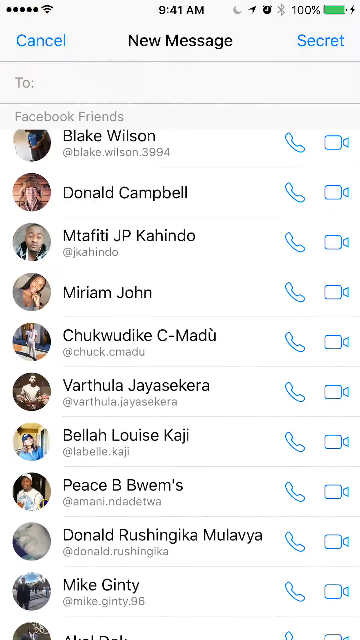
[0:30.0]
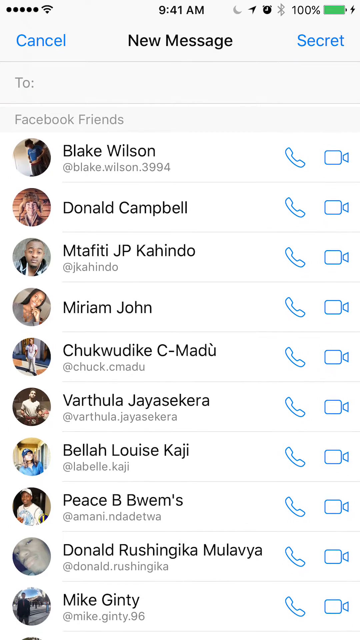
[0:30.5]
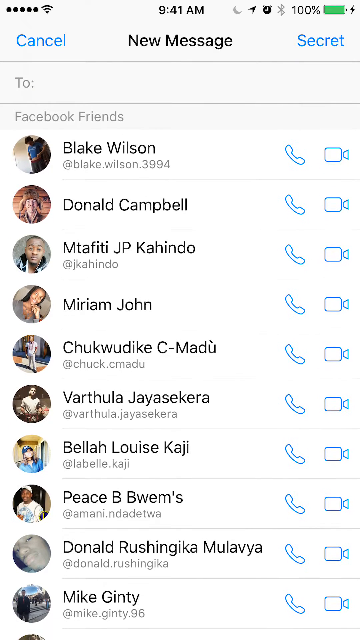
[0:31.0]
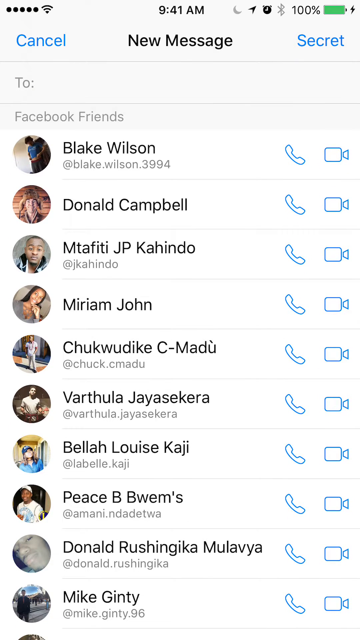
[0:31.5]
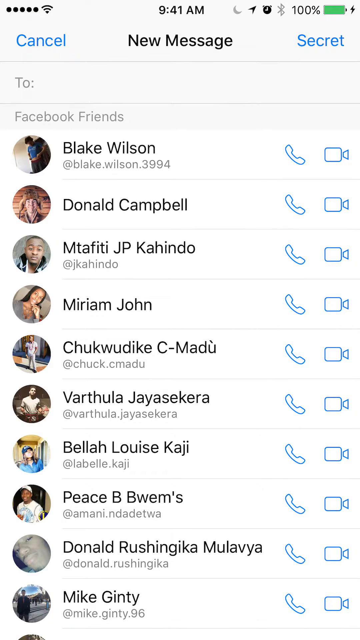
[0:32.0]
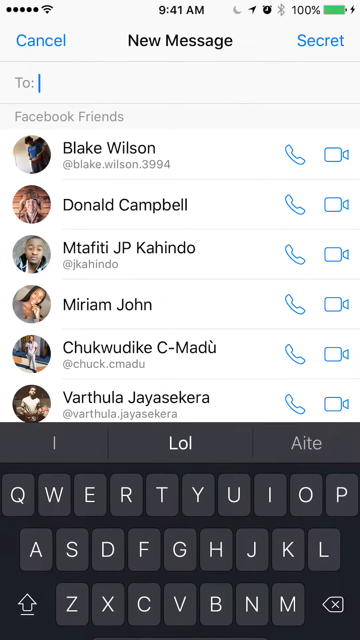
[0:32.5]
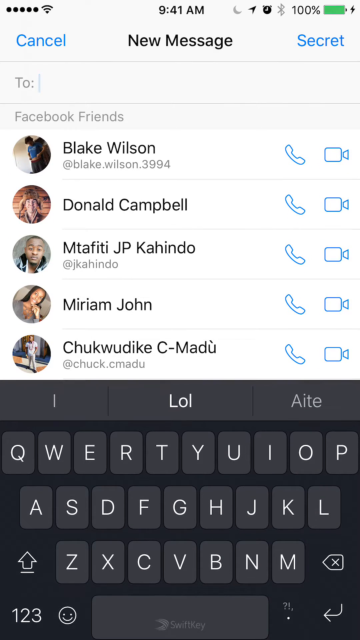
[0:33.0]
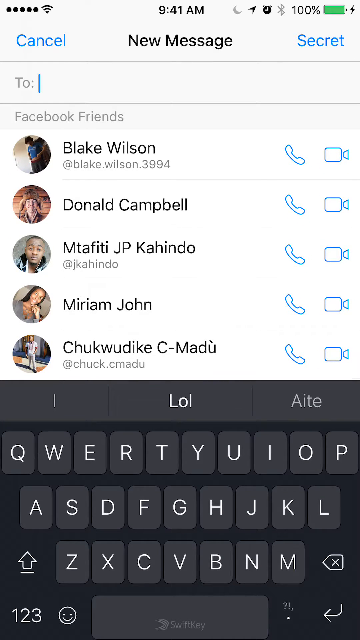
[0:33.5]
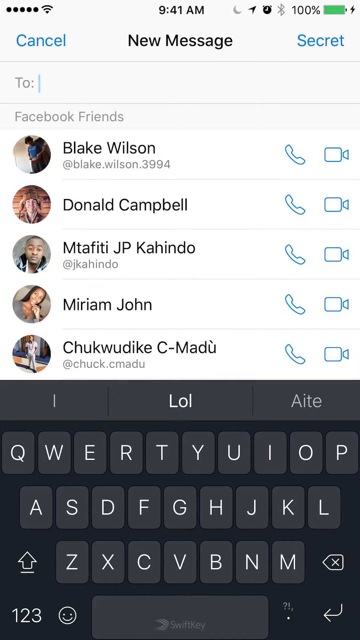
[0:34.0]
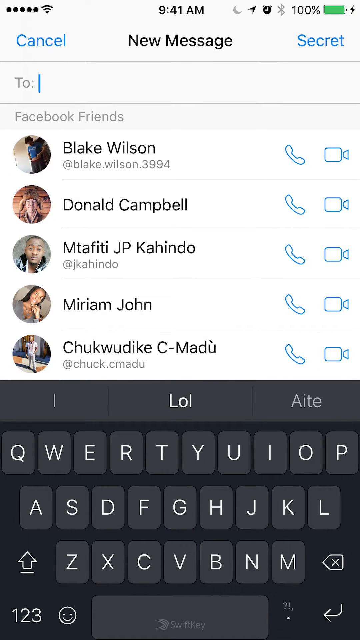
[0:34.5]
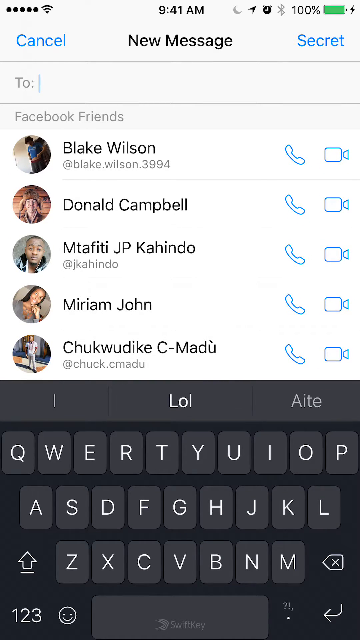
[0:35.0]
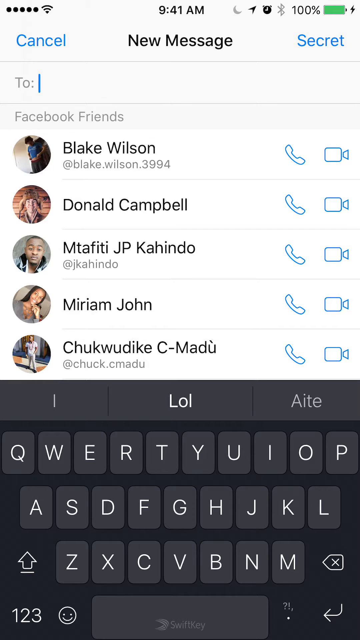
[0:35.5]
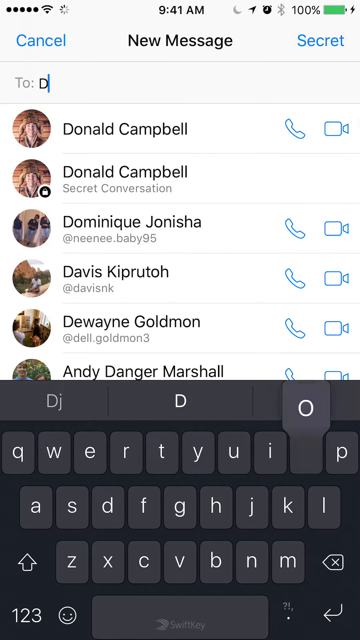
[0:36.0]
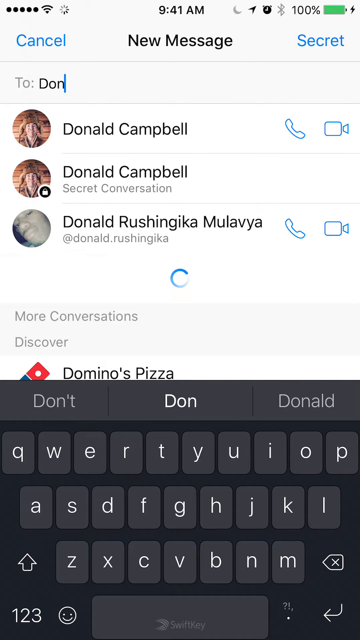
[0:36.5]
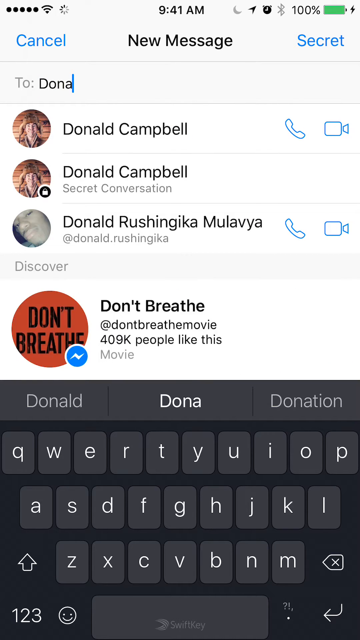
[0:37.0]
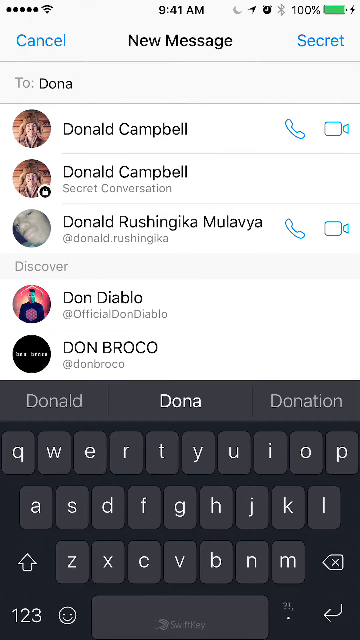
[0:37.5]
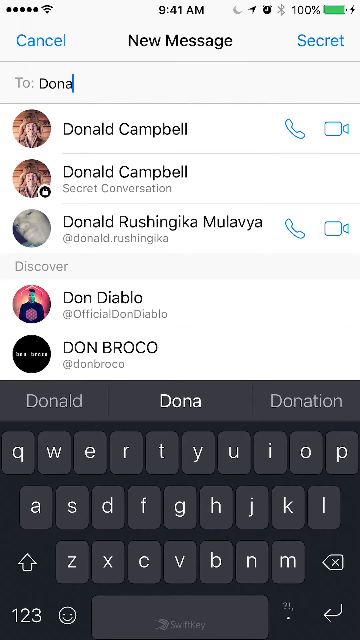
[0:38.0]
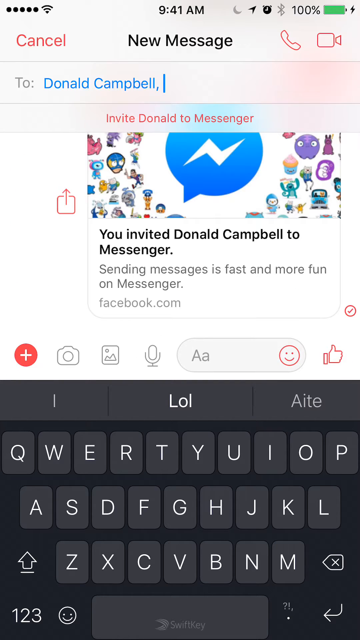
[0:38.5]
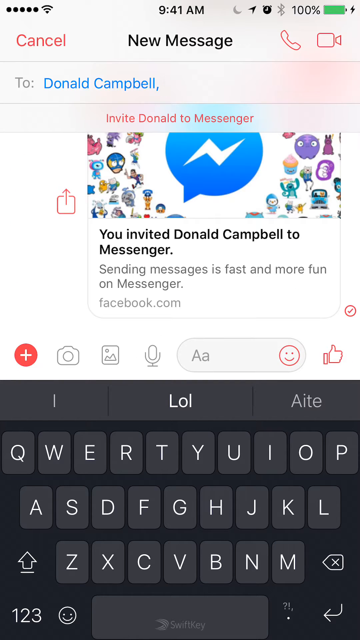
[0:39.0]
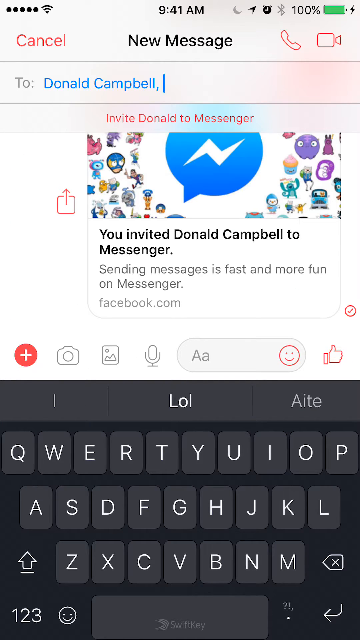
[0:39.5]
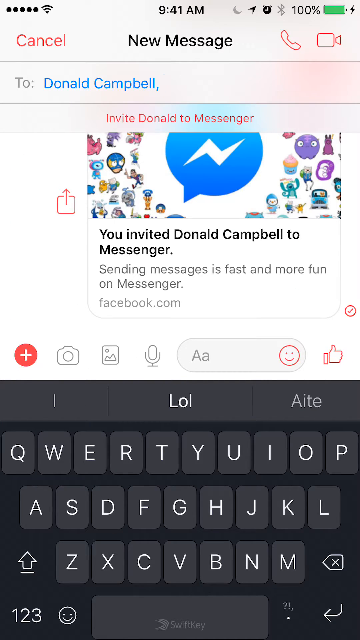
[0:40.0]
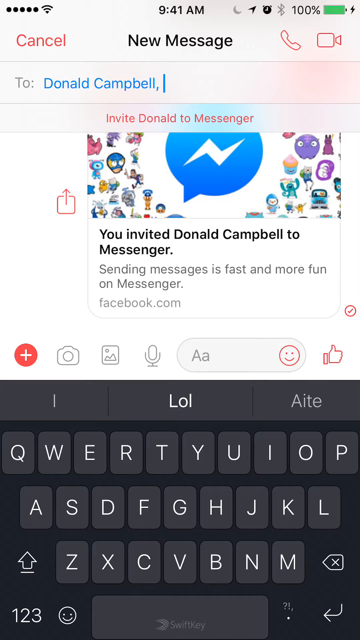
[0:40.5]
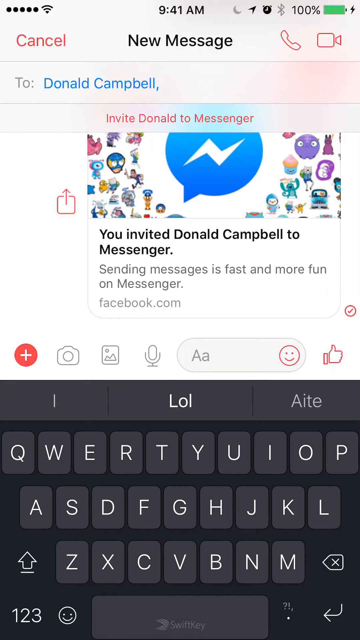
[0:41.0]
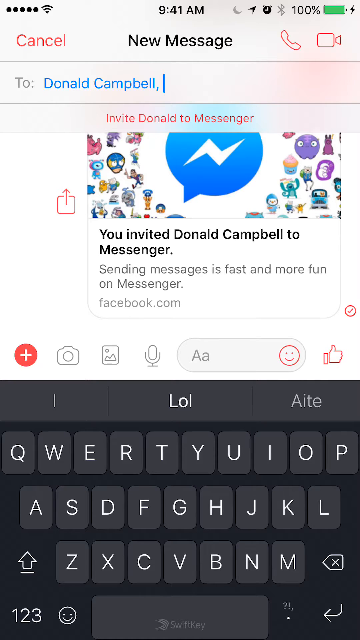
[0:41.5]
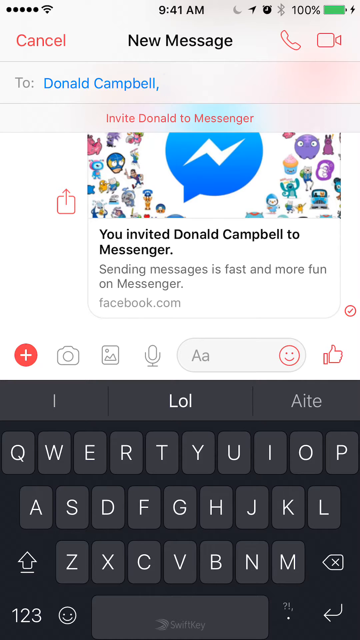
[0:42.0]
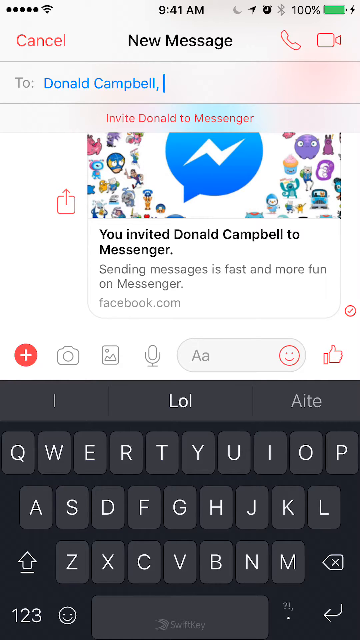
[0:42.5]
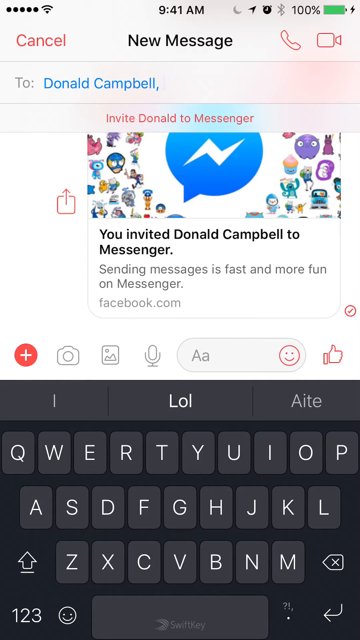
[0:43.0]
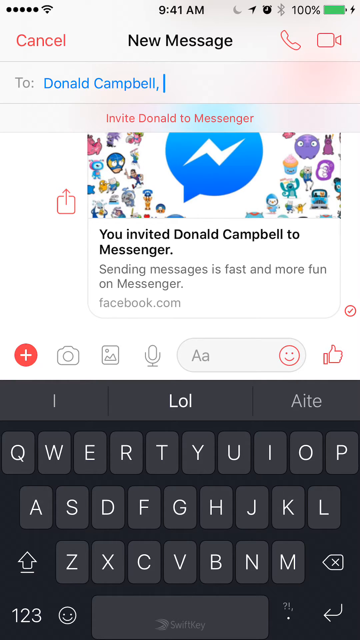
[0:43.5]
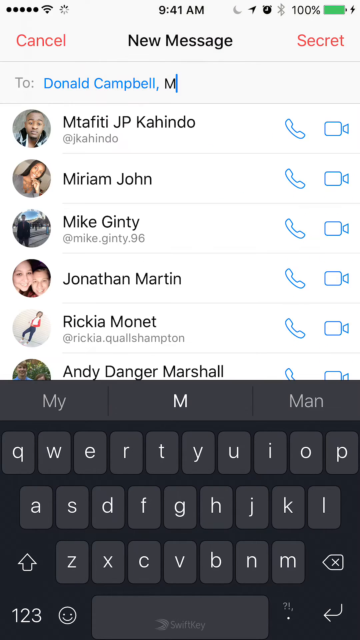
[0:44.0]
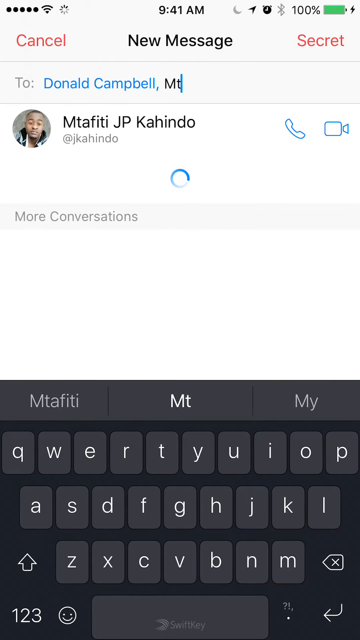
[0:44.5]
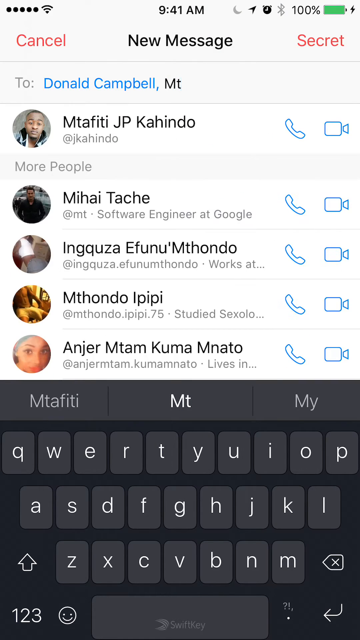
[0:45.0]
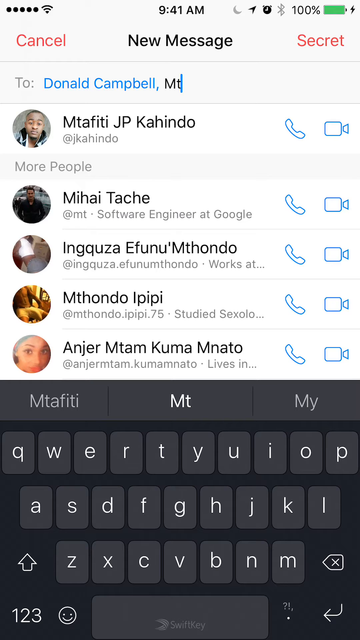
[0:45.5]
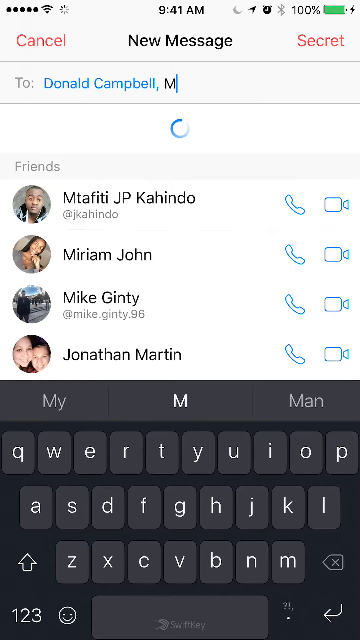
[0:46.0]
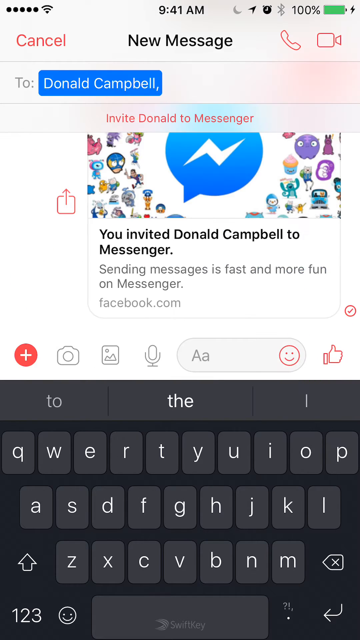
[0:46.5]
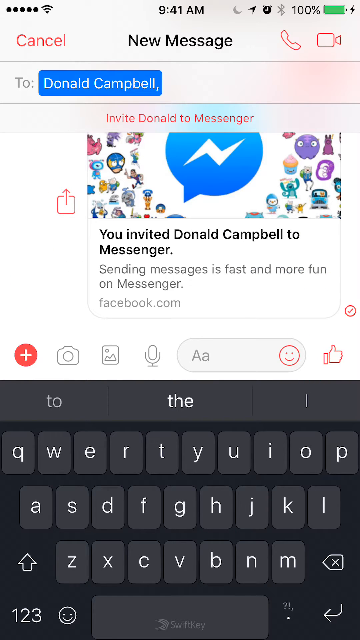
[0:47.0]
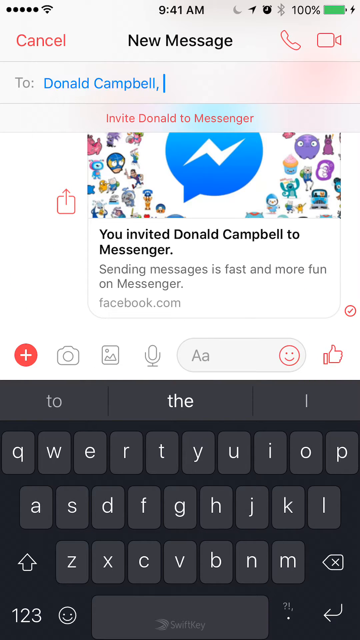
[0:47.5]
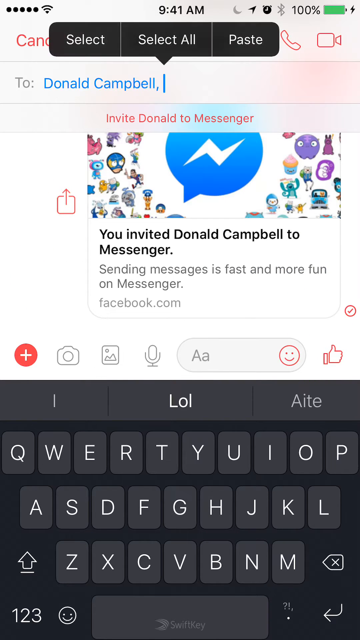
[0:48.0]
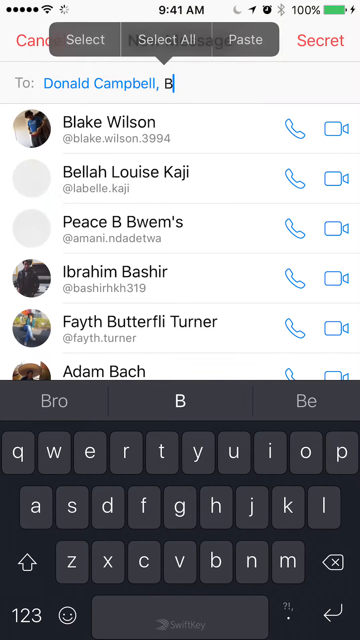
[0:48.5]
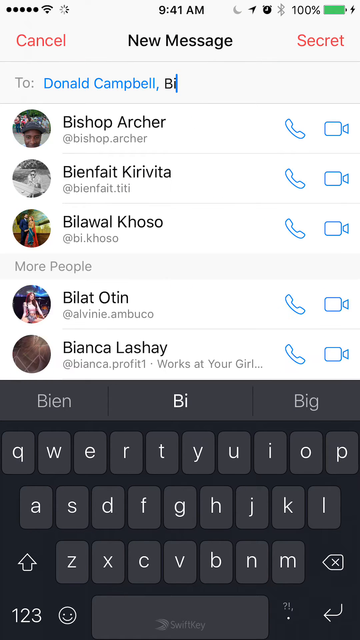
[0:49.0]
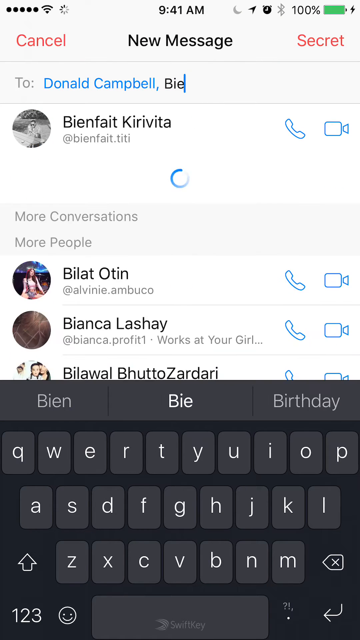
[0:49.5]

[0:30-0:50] The screen capture is of an Apple device, most likely an iPhone, and appears to show a messaging application. A cancel button is at the top left, a secret button at the top right, and the top reads "new messages" above a list of names. There appears to be a blue phone icon and a blue video call icon to the right of the names. The view scrolls downward through the names and then stops. The to input field then appears to be tapped, and a gray keyboard comes up from the bottom. "D-O-N-A" is typed, and a list of names appears below: Donald Campbell, Donald Rushing and Geekamulavia. Donald Campbell is tapped, and the screen now reads "new message to Donald Campbell,". Another name is typed: "MT", and a name pops up underneath reading "Matafiti J.P. Kahindo". The MT apparently gets deleted, and "BI" is typed instead. Names appear at the bottom reading "Bishop Archer", "Bienfait Kirivat Vita" and "Bilalwal Koso", and then "B-I-E" is typed.